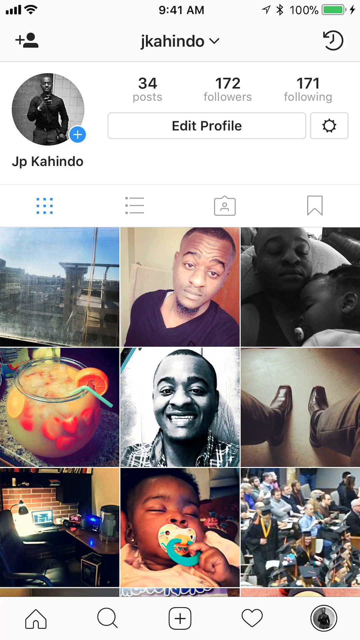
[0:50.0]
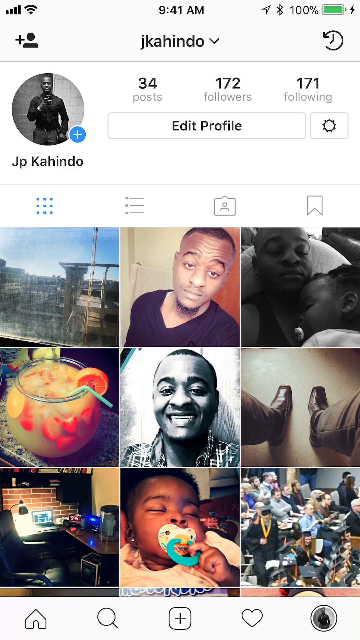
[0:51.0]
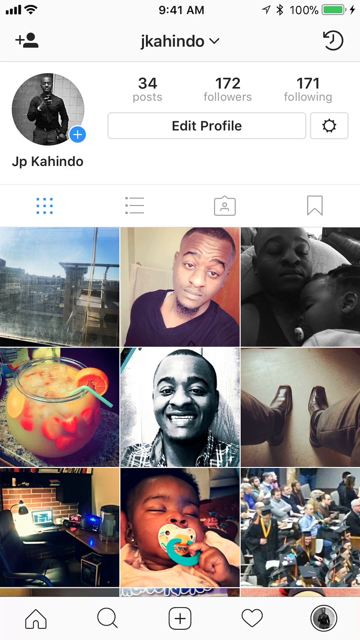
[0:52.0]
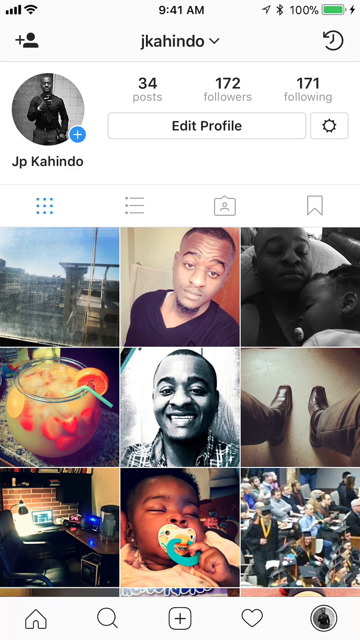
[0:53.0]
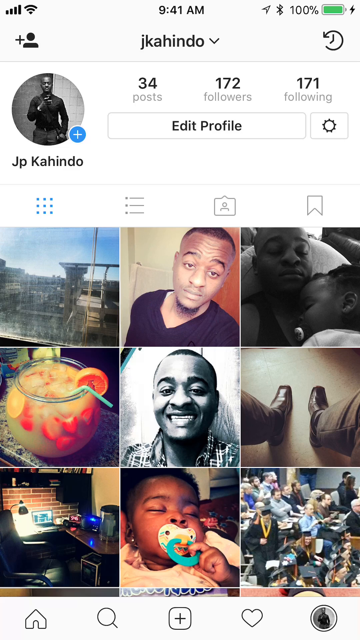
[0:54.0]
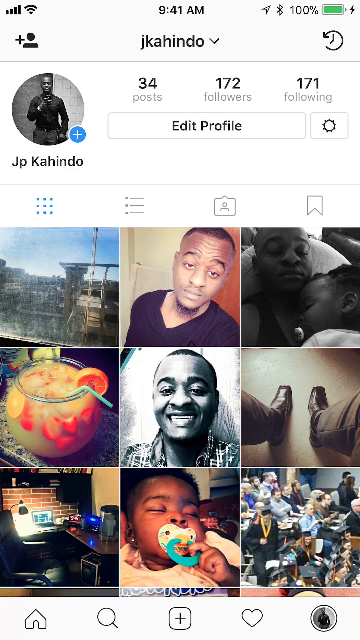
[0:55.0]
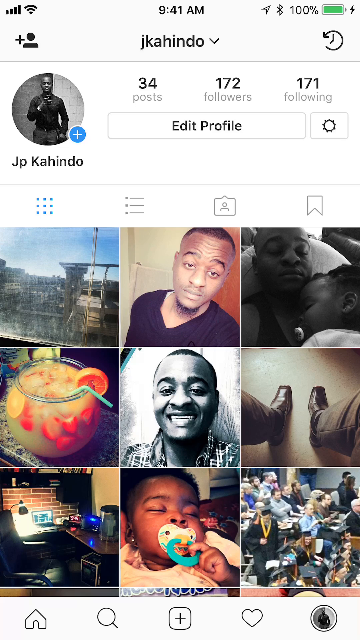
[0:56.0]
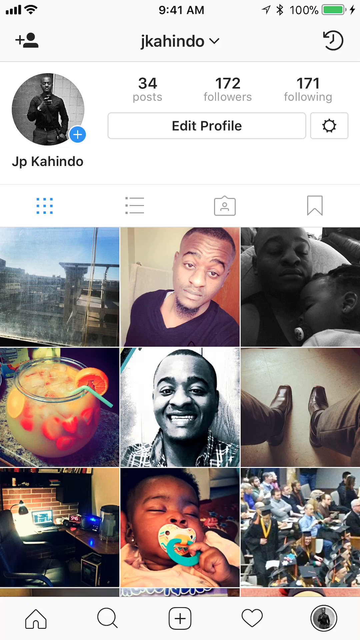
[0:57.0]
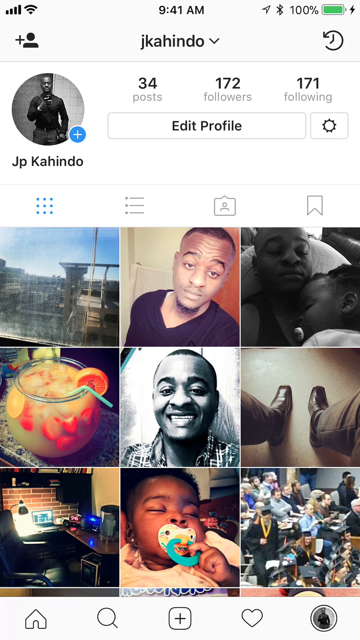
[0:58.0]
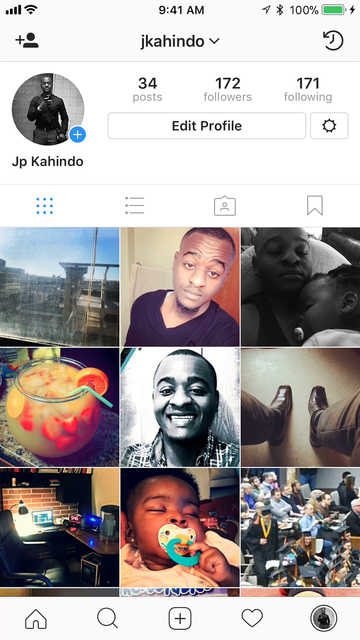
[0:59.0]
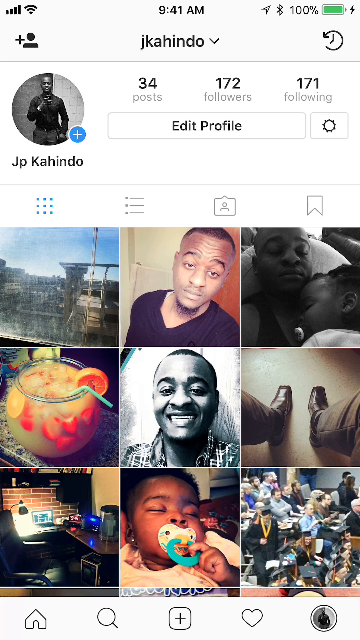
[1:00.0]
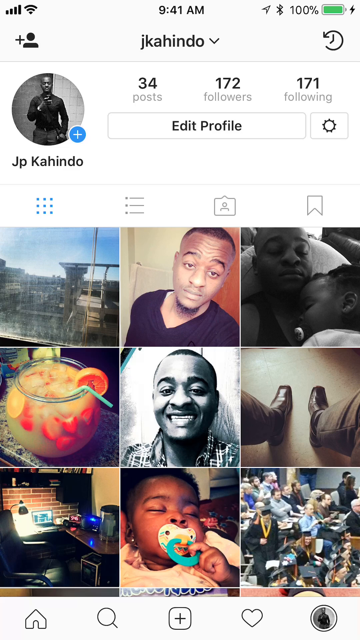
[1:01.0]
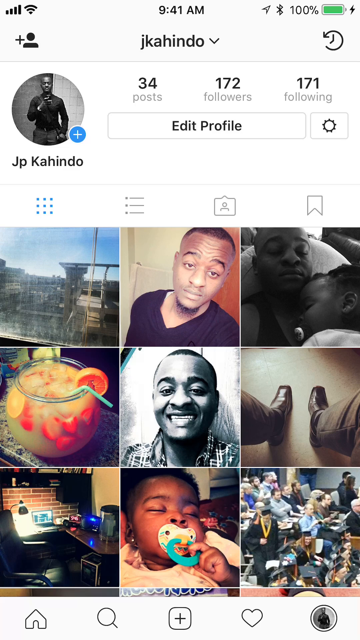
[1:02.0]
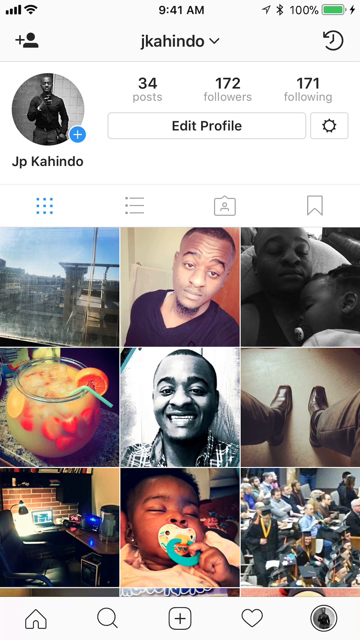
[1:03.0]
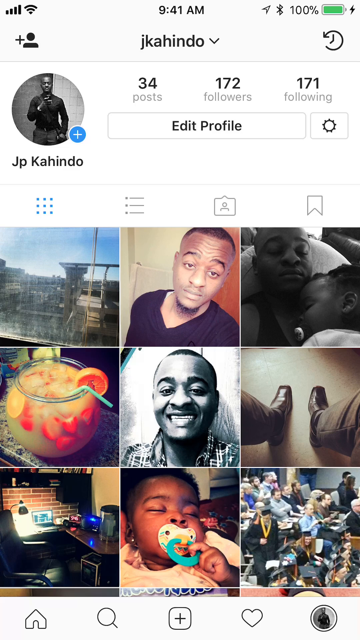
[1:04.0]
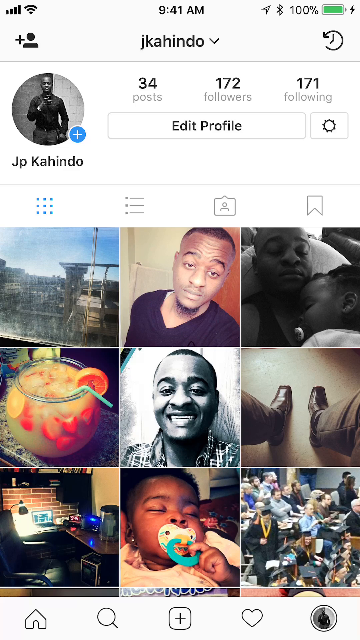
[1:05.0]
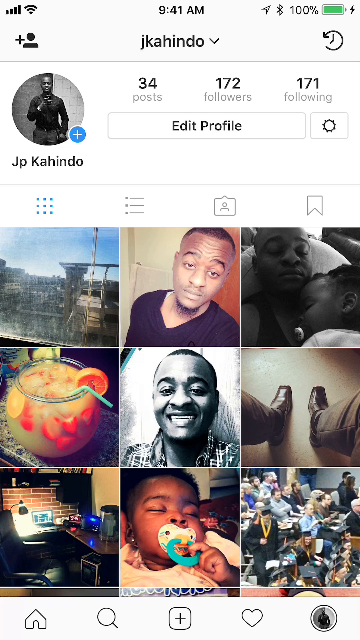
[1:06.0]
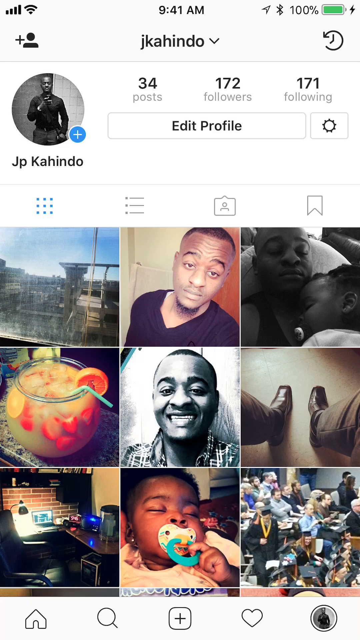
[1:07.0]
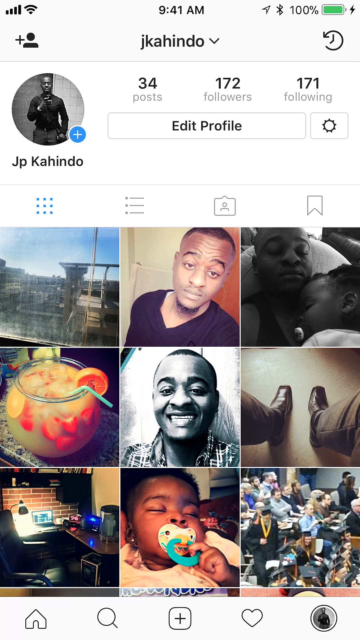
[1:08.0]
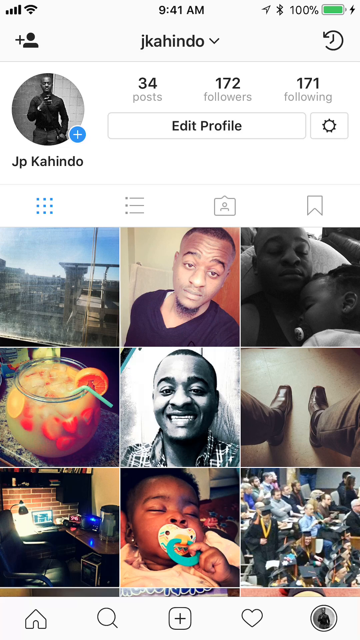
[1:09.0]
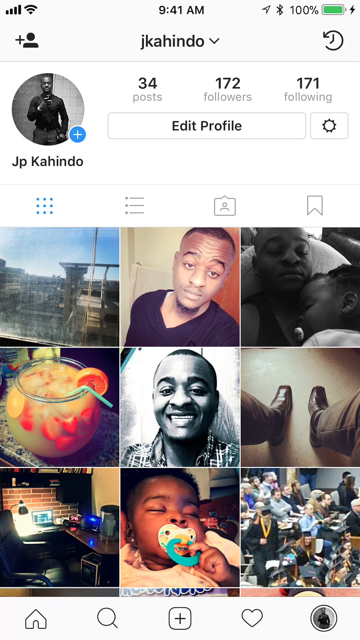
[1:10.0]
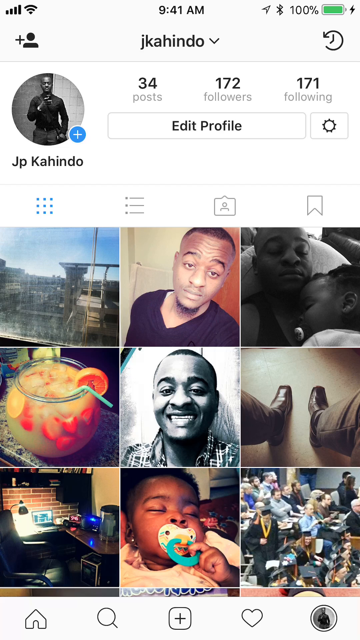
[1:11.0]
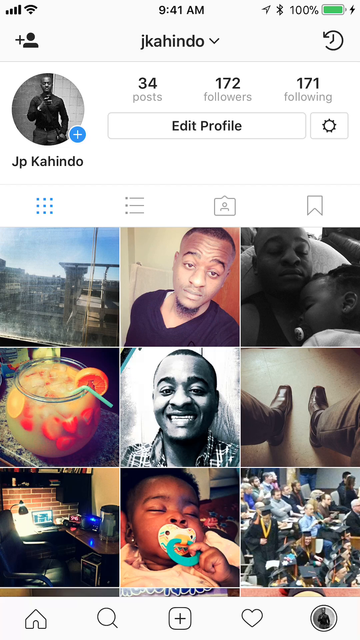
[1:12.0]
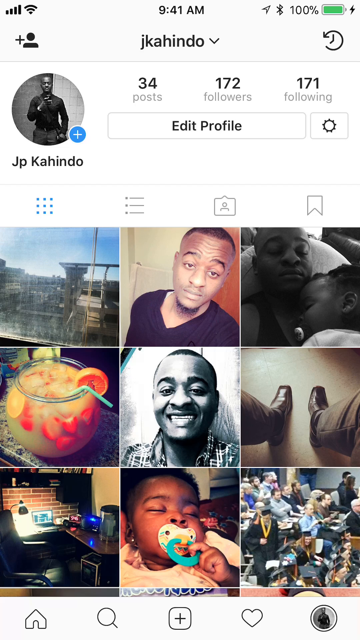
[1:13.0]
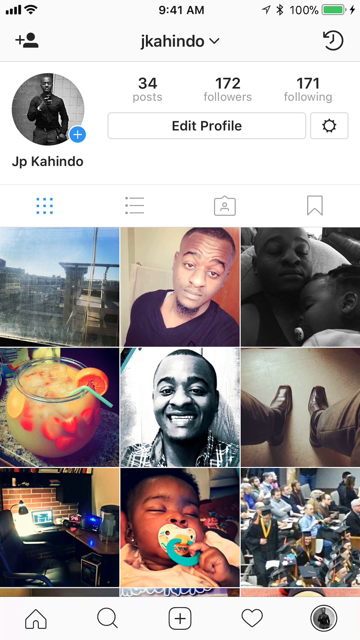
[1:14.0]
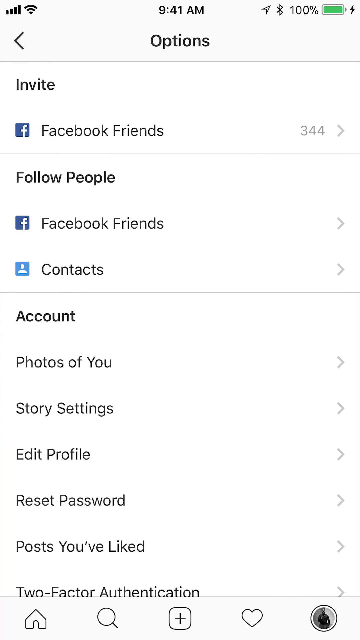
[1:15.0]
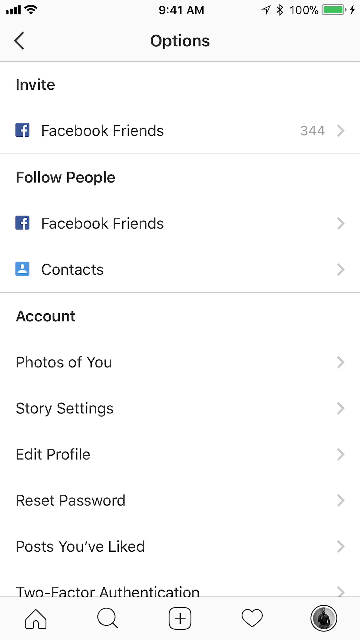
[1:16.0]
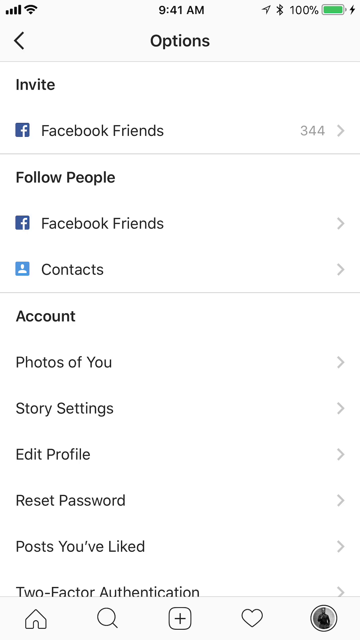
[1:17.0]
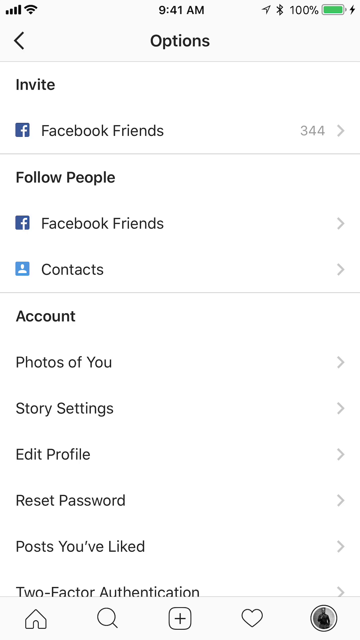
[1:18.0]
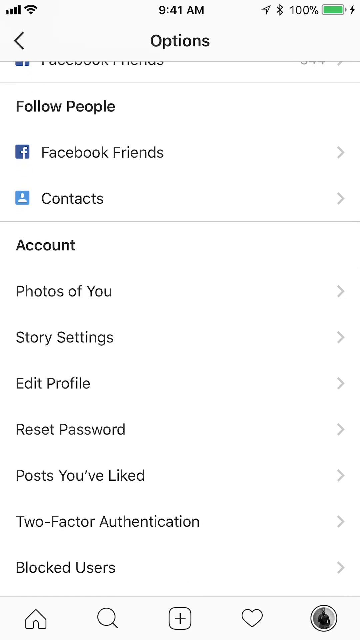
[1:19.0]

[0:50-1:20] A mobile view of an Instagram profile page shows the account with the tag JKAHINDO and the username JP KAHINDO, with 34 posts, 172 followers, and 171 following. The app is in the light theme with a white background. The page shows 9 posts, including selfies of himself, pictures of the outdoors, a picture of him with his baby, a picture of a drink, a picture of his shoes, a picture of himself smiling, a picture of his office desk, and more pictures of his baby. Most appear to be taken with a low-quality, vintage-like camera. The default Instagram buttons are at the bottom. The video then transitions to his account's settings page, which says "Options" at the top, with sections to invite Facebook friends, a section called "Follow People" with Facebook friends and contacts underneath, and account settings listing photos of you, story settings, edit profile, reset password, posts you've liked, and two-factor authentication.